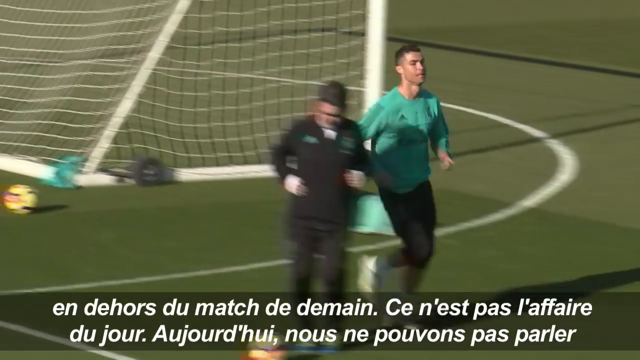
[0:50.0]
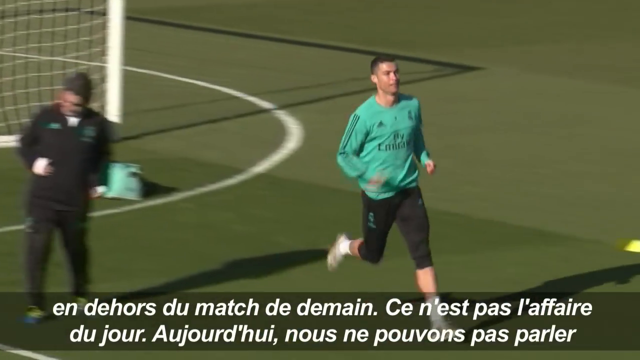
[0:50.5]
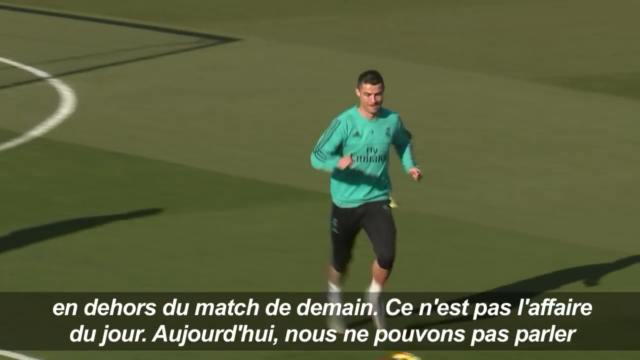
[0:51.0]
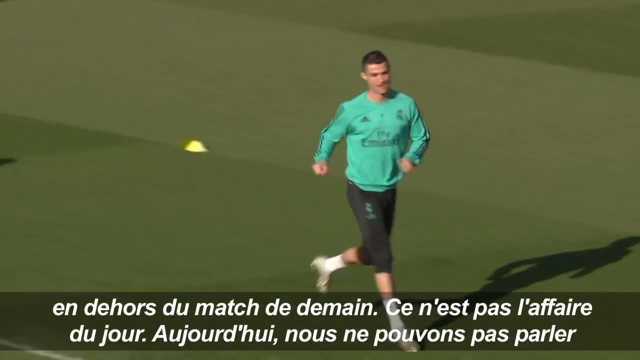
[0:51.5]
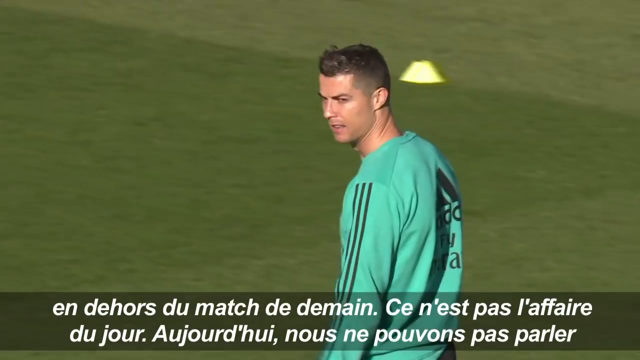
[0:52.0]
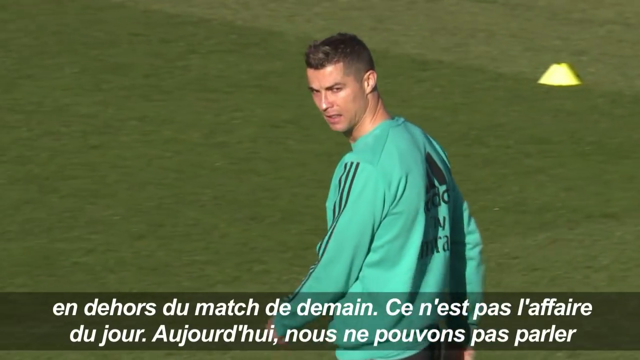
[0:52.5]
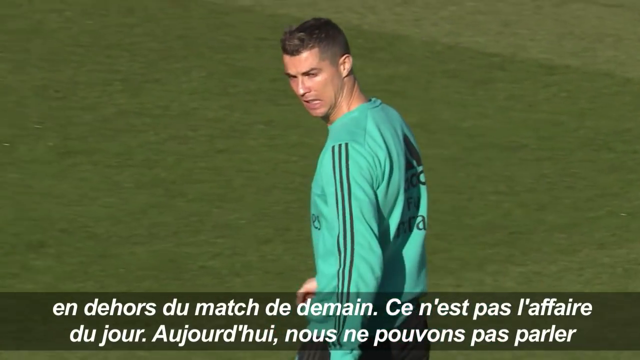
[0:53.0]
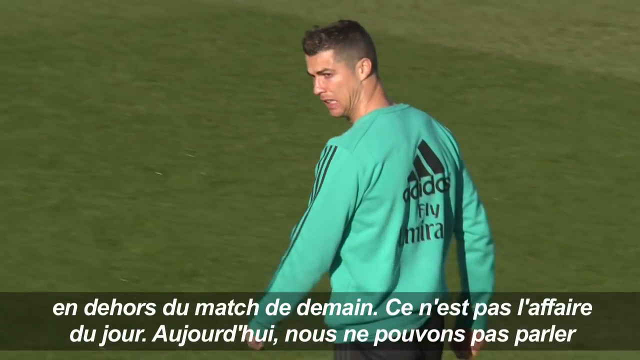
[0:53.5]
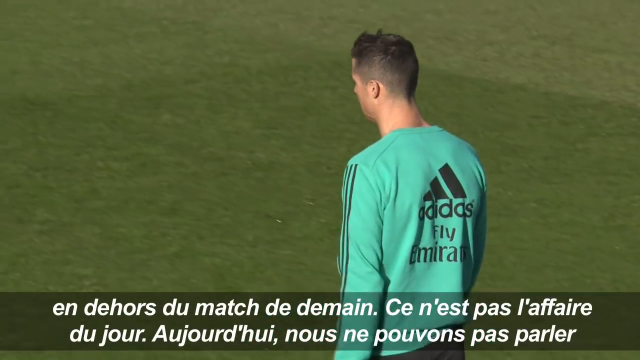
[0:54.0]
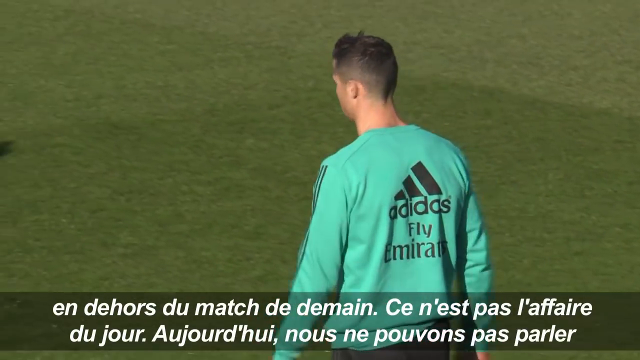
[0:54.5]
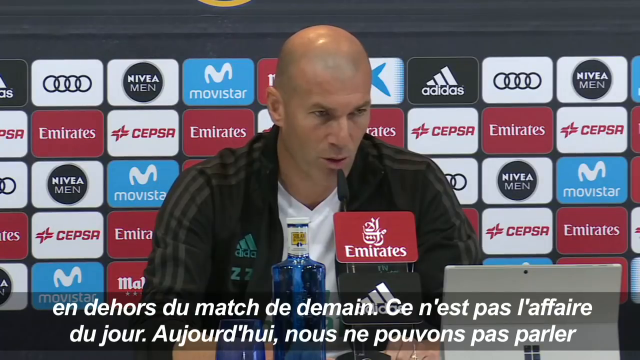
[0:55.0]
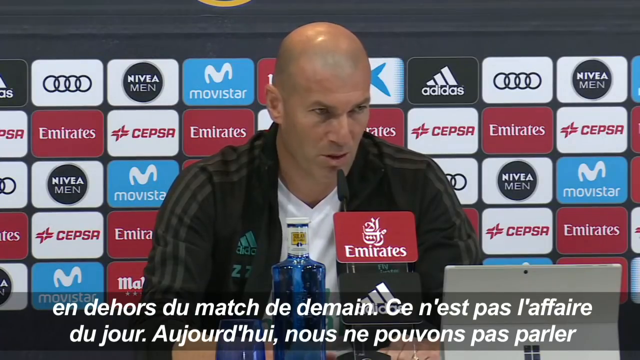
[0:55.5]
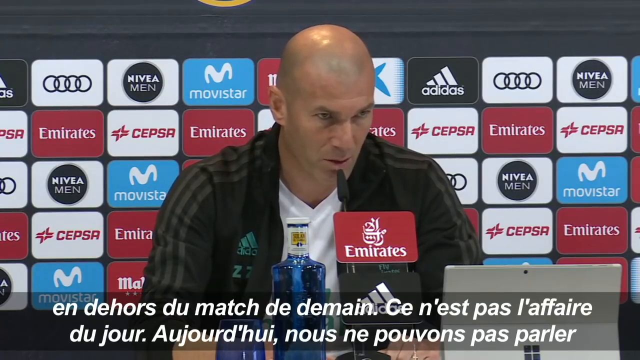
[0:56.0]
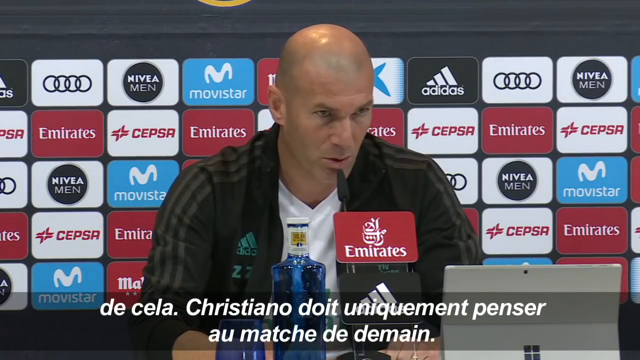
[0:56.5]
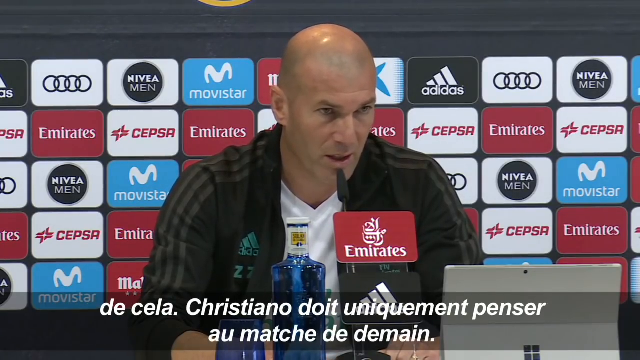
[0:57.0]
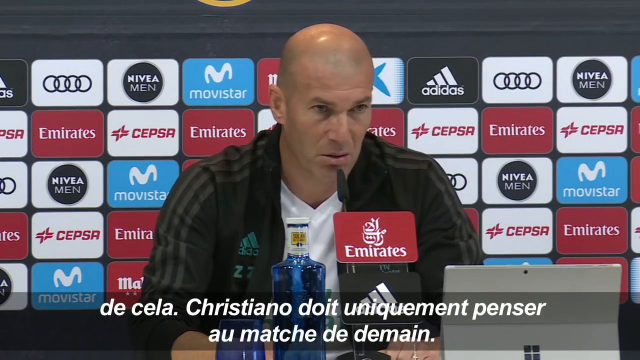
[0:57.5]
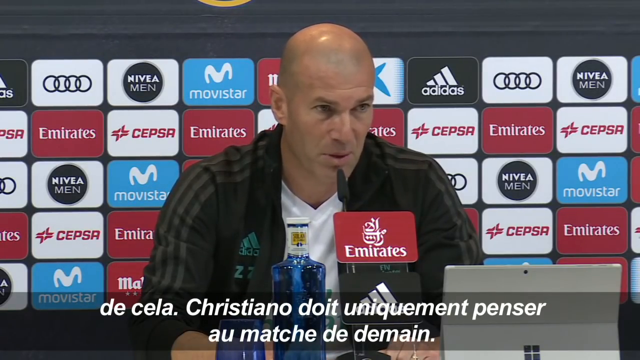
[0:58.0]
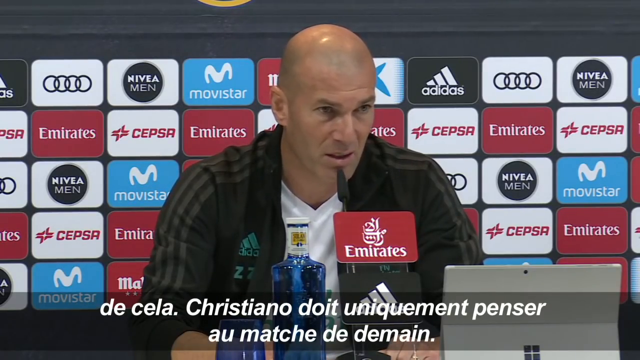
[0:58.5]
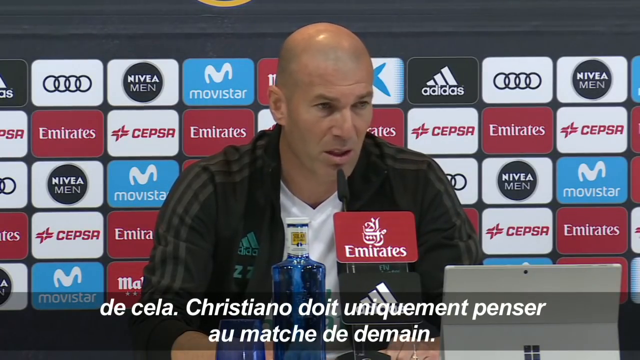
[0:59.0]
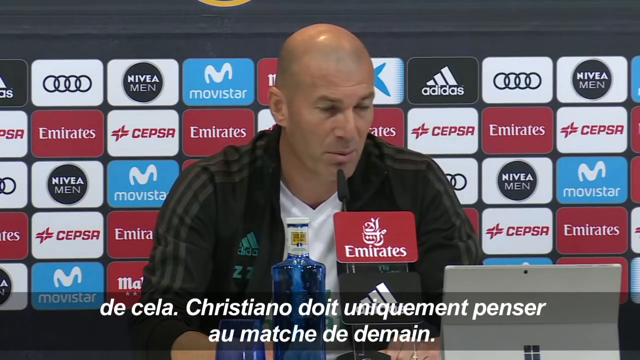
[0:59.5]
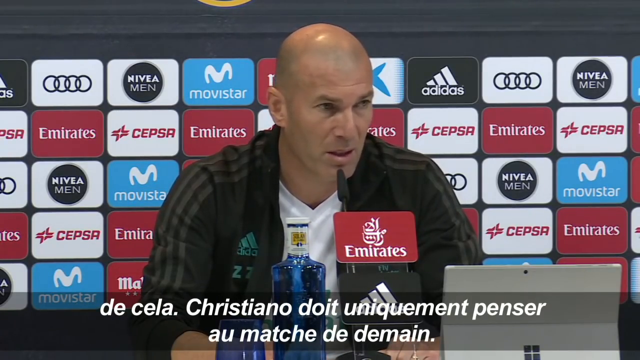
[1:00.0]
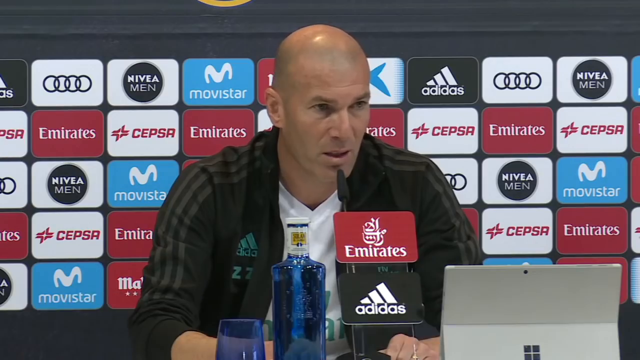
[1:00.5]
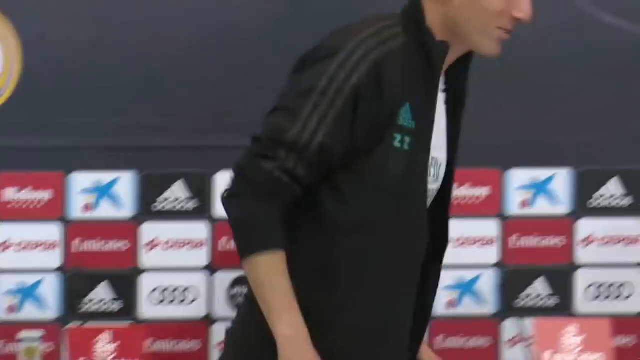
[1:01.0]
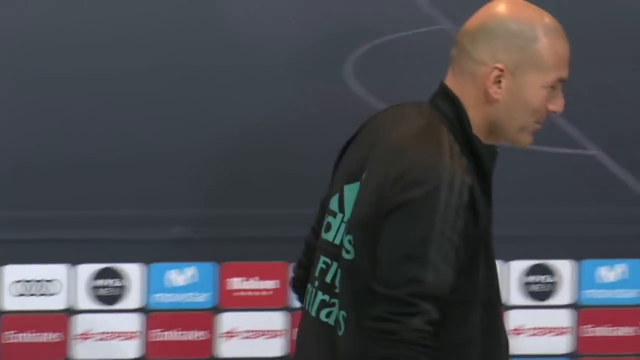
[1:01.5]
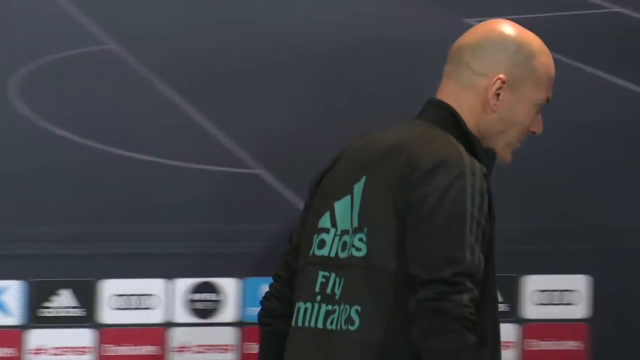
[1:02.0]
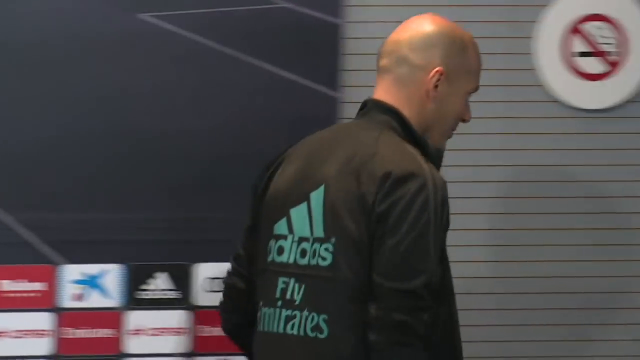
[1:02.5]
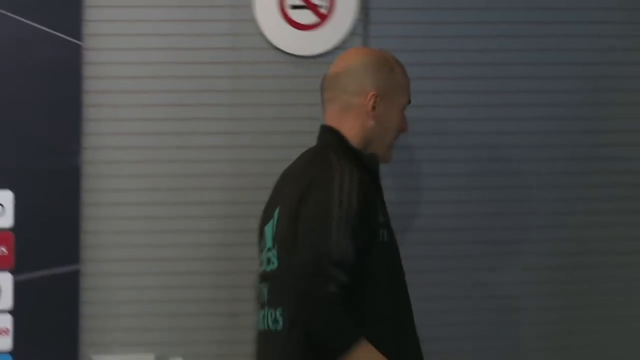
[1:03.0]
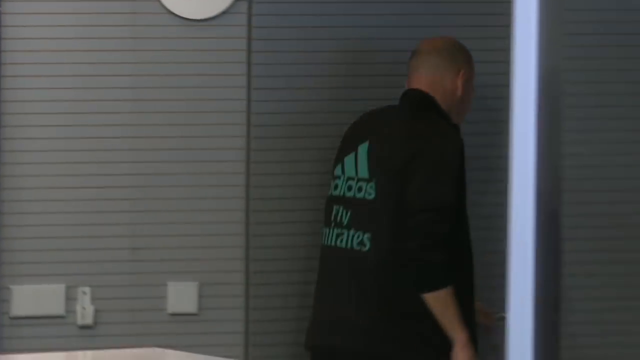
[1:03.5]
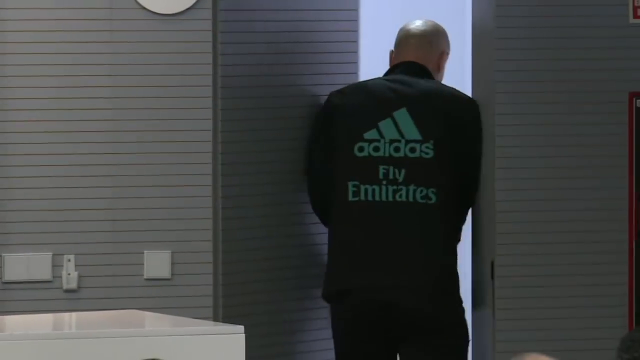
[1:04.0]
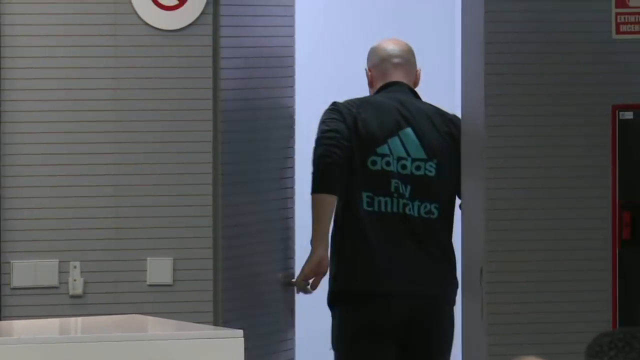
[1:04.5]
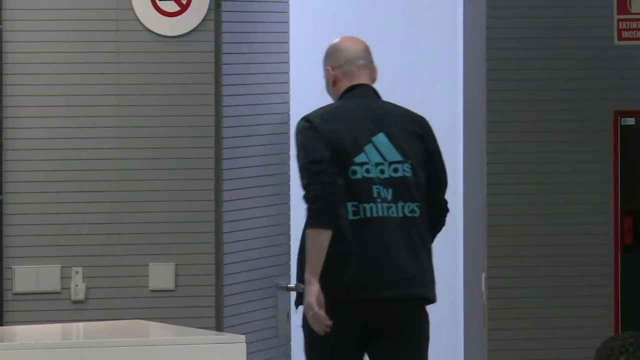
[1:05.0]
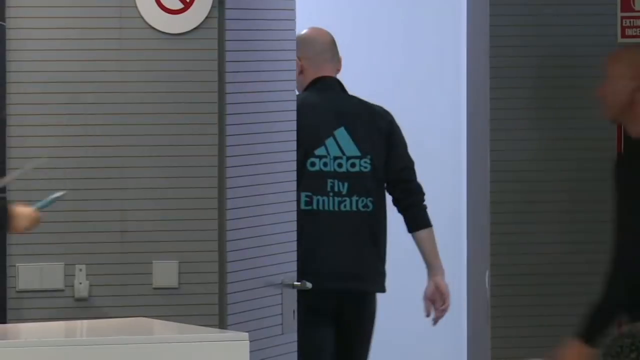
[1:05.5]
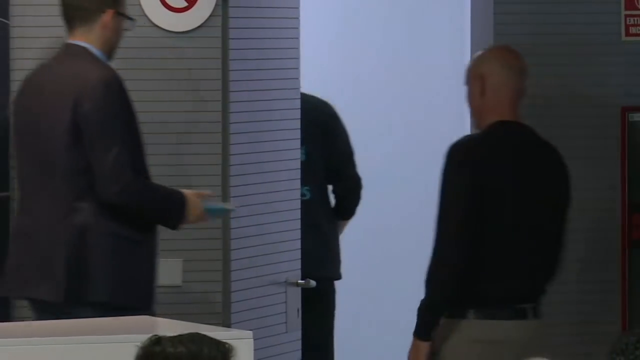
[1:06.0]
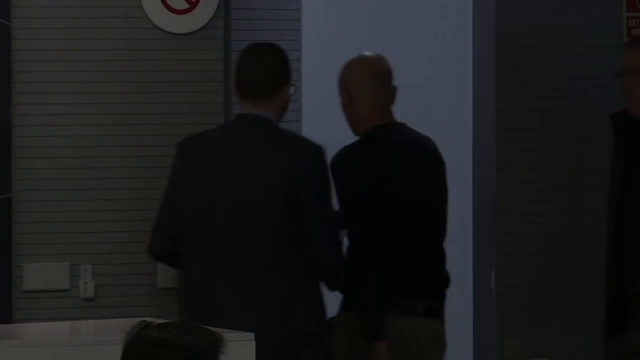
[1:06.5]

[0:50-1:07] On a soccer field, two players run around. One wears a long-sleeve green shirt with black stripes and Adidas on the back. The coach then appears at a press conference, wearing a black jacket with a white shirt underneath and a green Adidas emblem; he is balding and in his mid to late 40s. Behind him are several advertisements, such as Adidas, Nivea Men, Movie Star, Audi and Emirates. He speaks into a microphone; the top sign has a red background with white letters reading Emirates, and the bottom one is black with white letters reading Adidas.